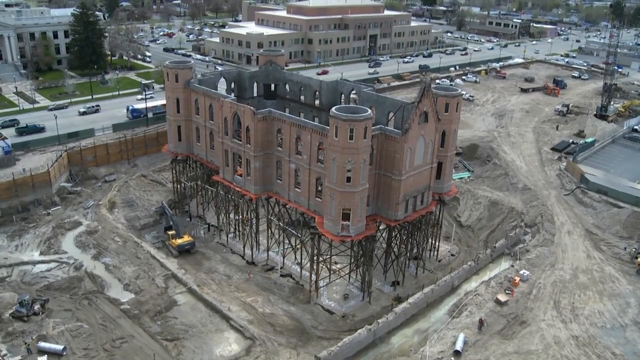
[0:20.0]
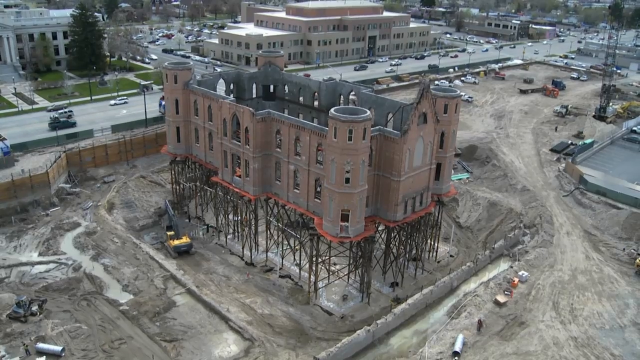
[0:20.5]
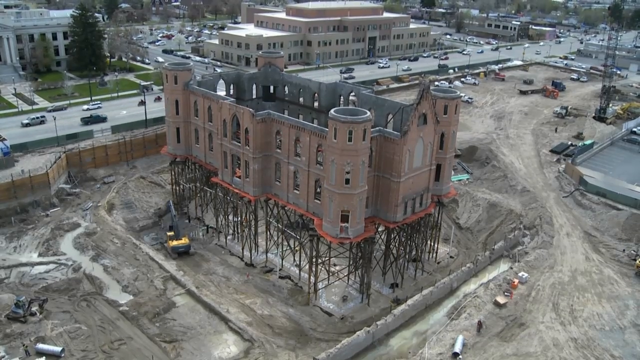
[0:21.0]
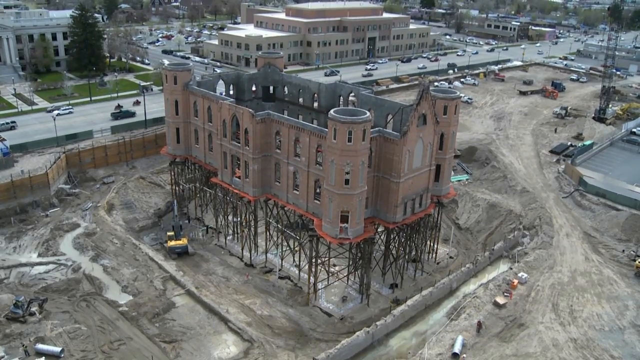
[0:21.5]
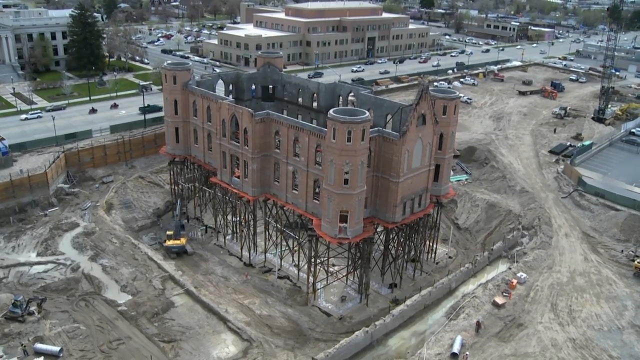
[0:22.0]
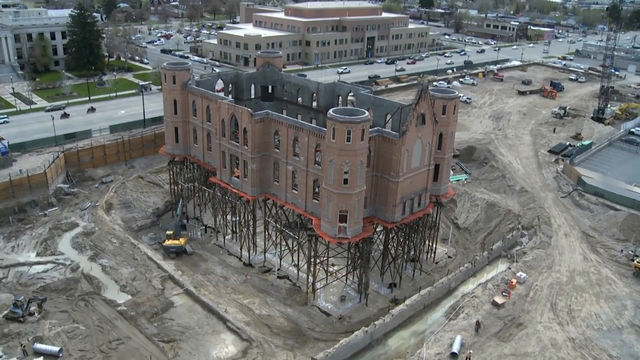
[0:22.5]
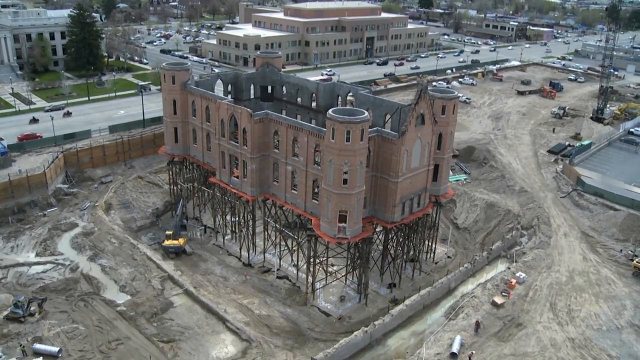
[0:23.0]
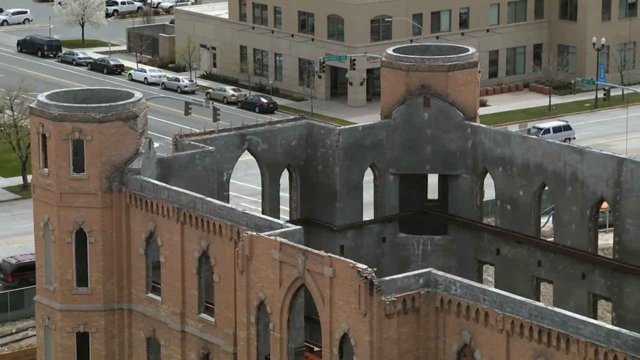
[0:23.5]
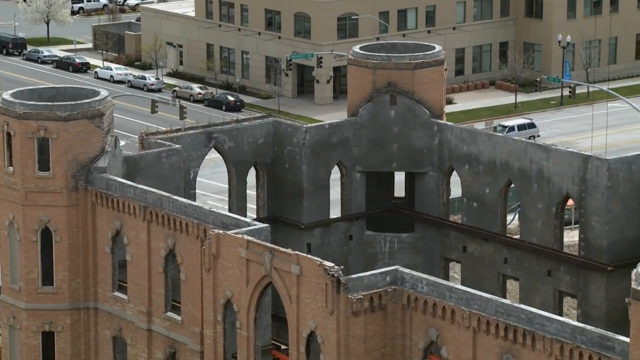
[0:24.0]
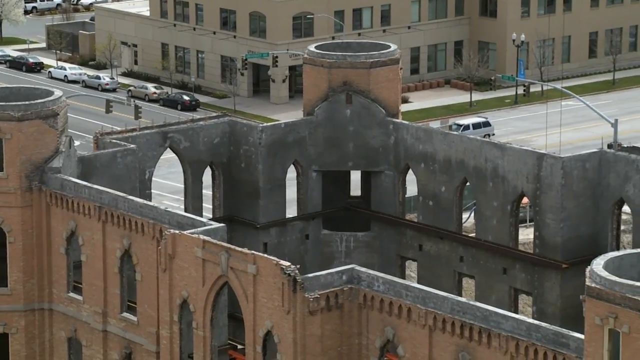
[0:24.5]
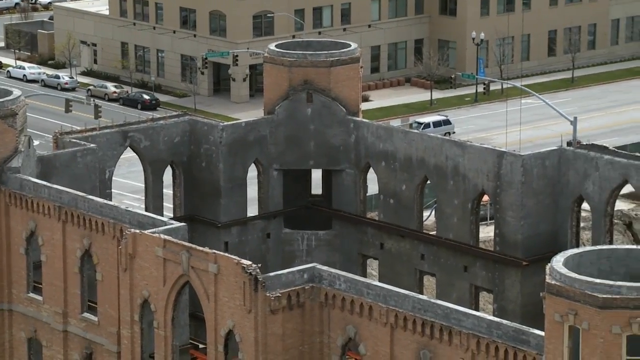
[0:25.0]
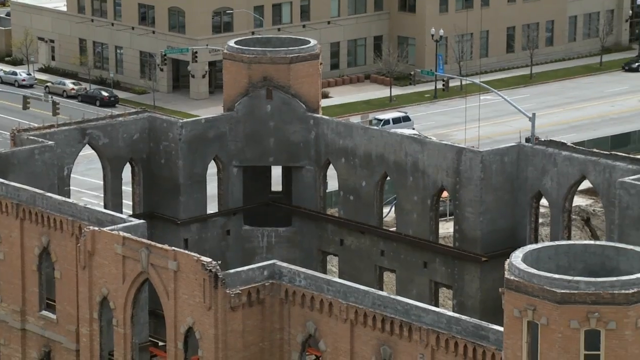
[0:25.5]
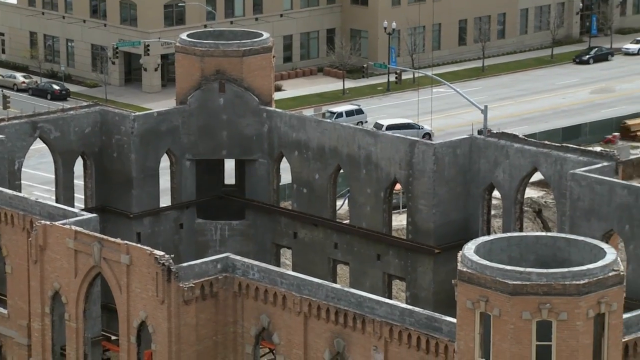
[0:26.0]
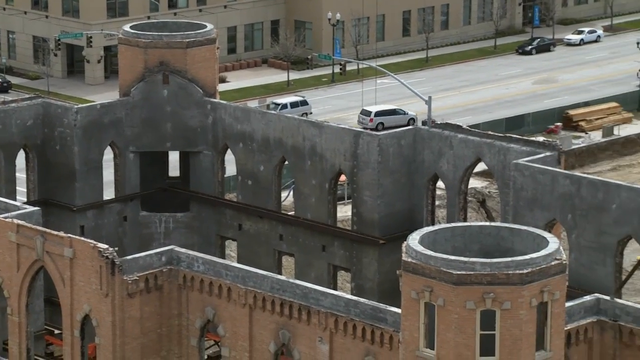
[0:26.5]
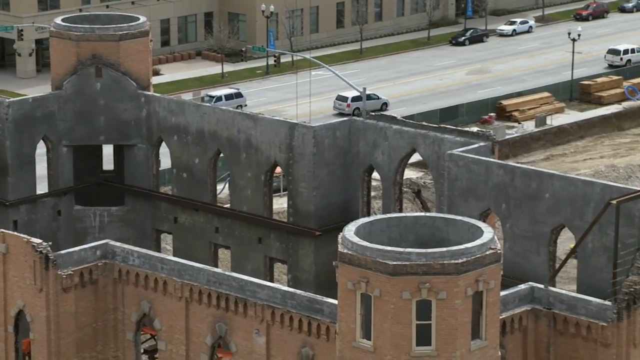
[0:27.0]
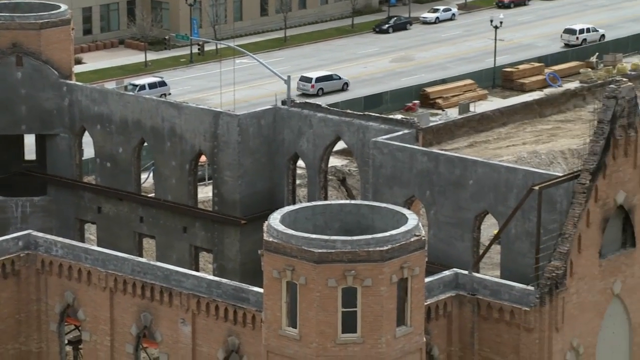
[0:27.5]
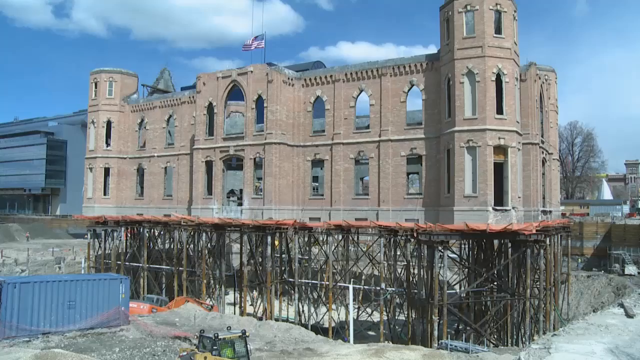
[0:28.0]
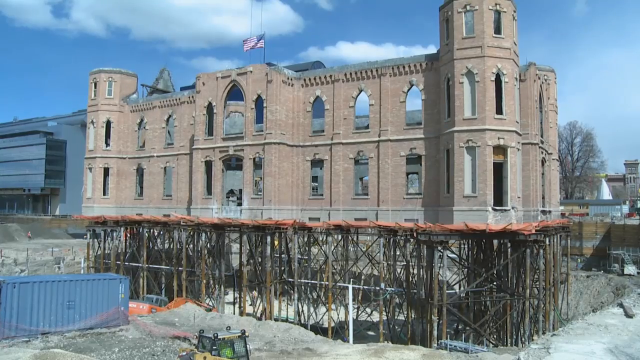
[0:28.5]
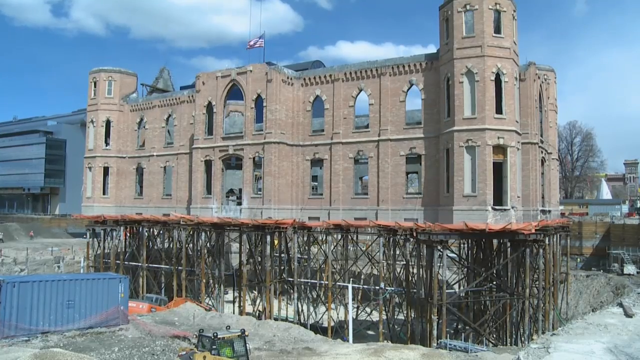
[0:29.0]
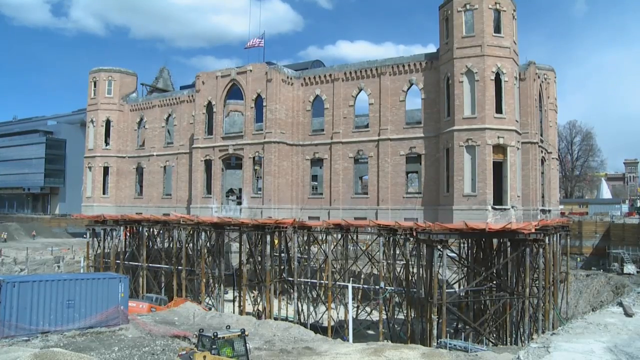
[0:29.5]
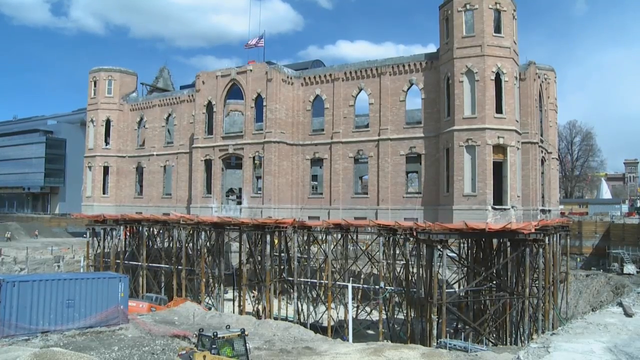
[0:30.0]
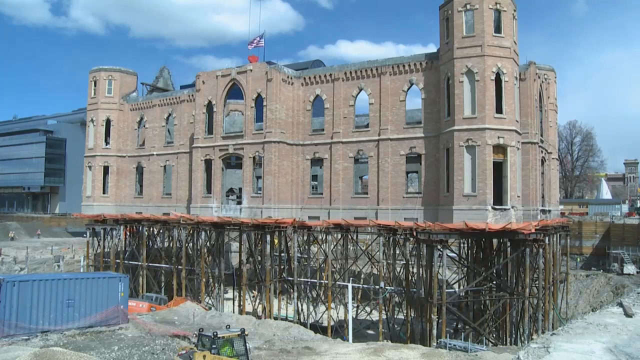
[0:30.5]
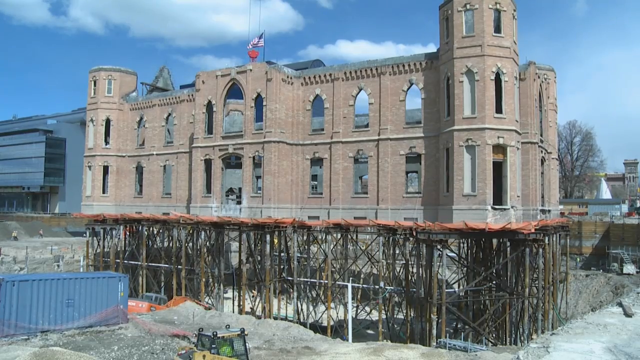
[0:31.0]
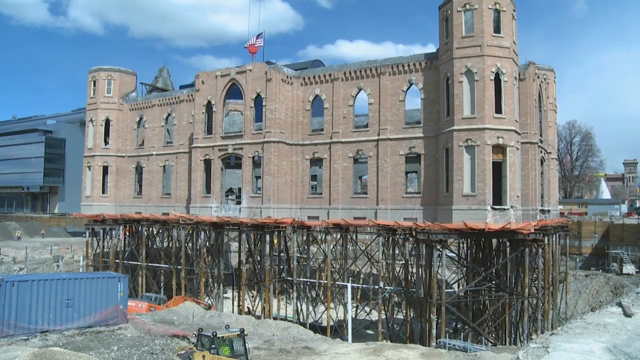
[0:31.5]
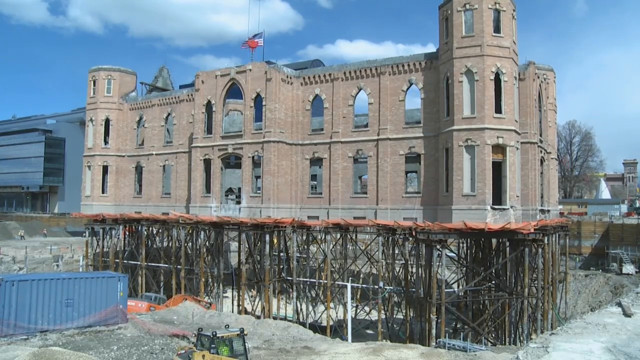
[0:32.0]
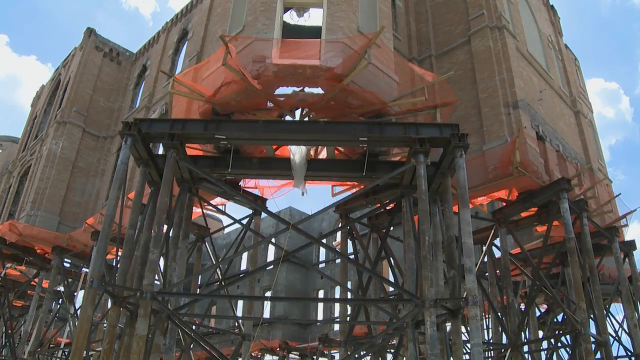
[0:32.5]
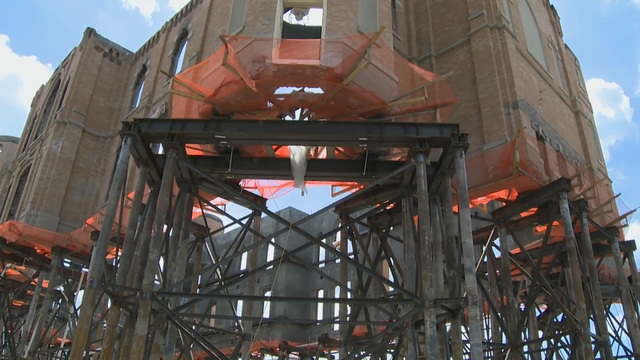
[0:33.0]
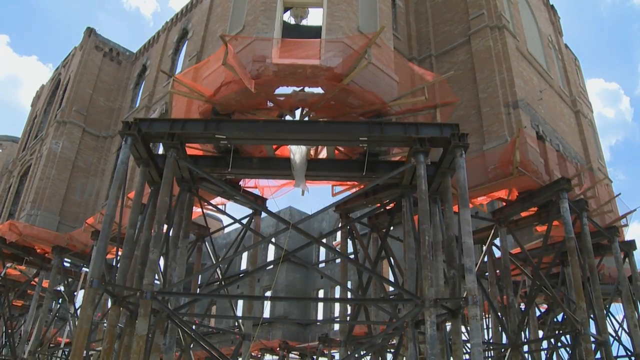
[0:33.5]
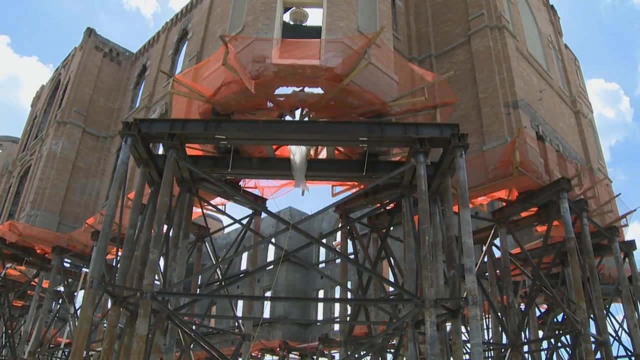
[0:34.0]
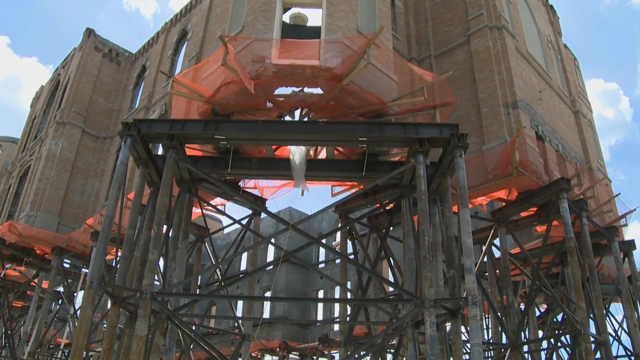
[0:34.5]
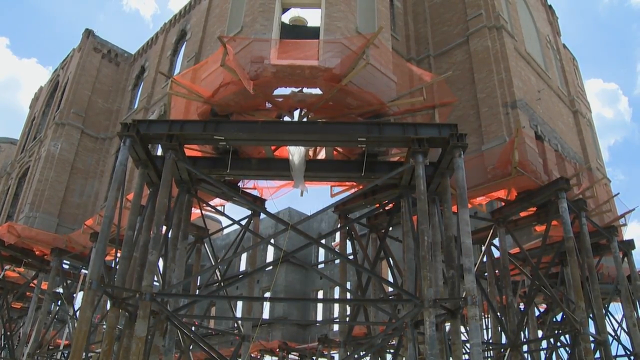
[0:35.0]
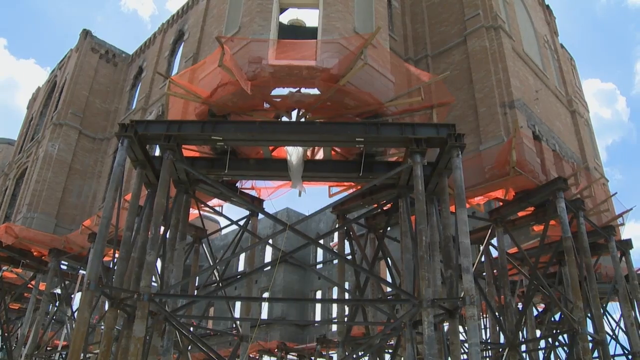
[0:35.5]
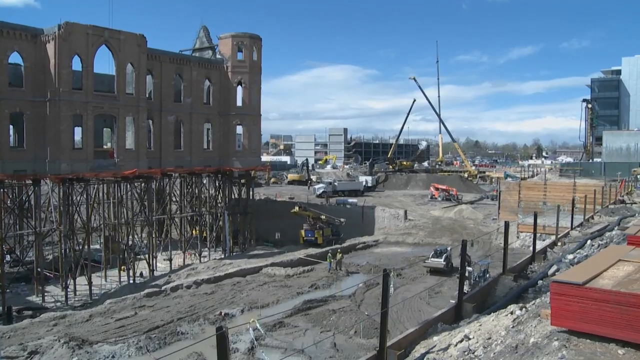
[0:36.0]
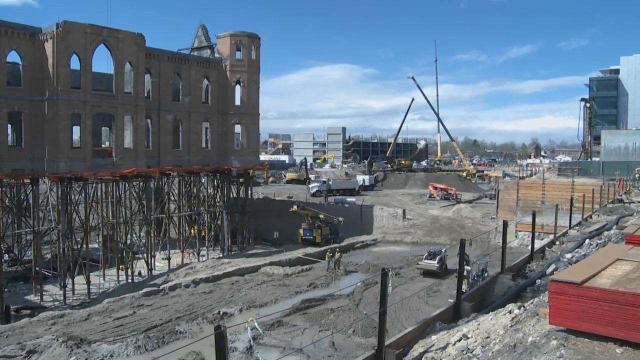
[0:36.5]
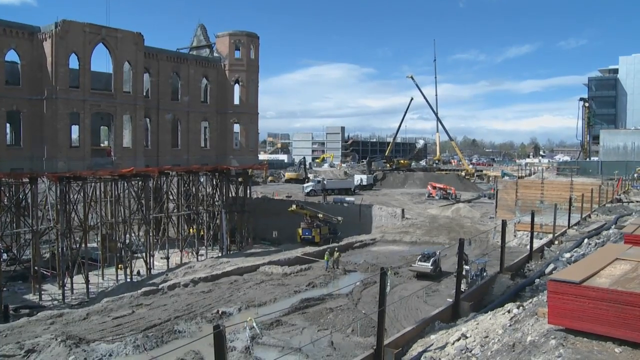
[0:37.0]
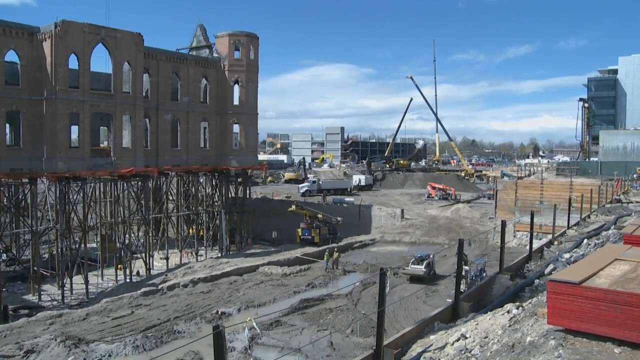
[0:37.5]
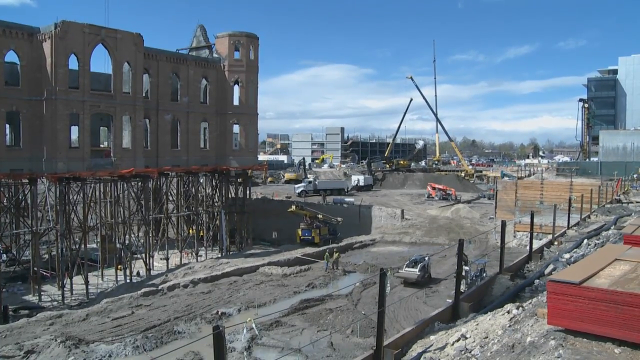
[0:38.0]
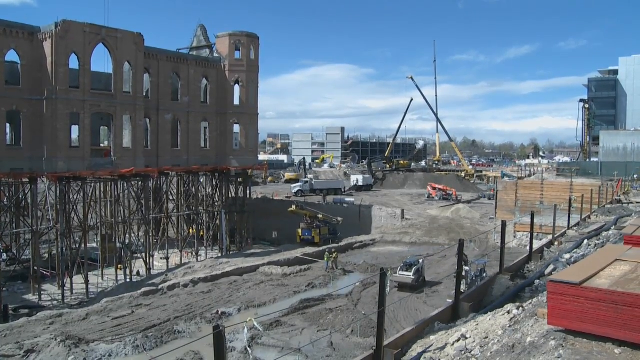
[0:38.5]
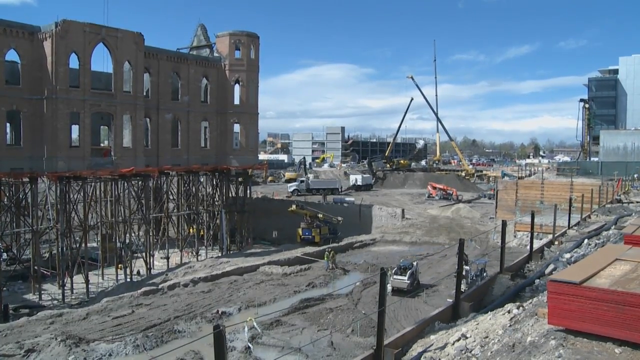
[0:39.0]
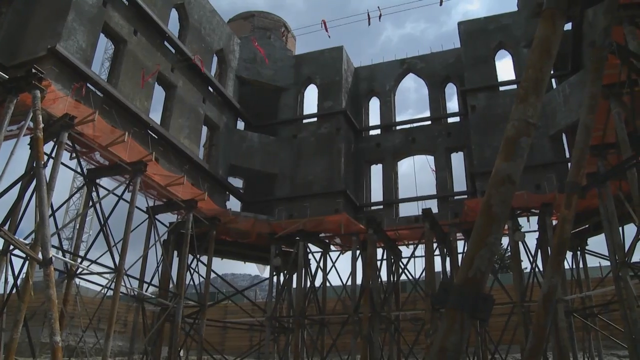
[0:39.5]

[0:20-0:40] Images of the church continue, now a top-down view of the church structure, with nothing inside it. A different image from the side shows the scaffolding underneath the building and construction vehicles around it. The video cuts to an exterior view, back to the top-down view, and to a front-facing view of the church exterior with scaffolding underneath. It then cuts to the back side, where a little digger truck runs along, and back to the surrounding areas. It appears to be various cutaways of the church under construction from different angles: top-down, from the side, from a different side, and more panned out.